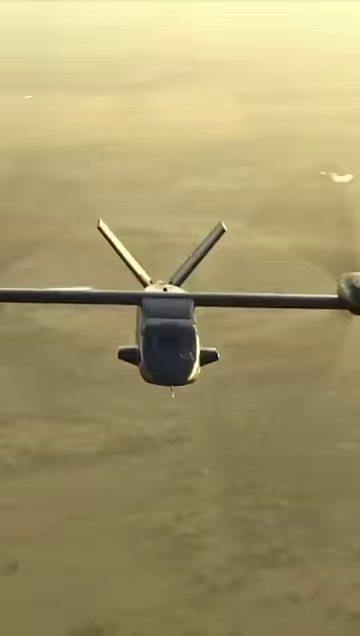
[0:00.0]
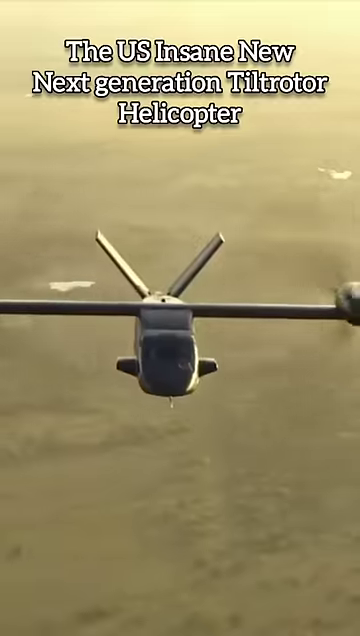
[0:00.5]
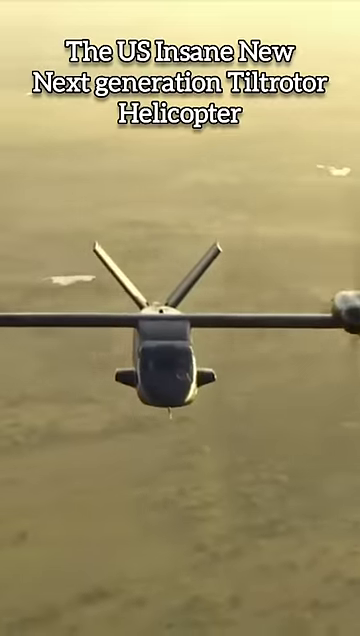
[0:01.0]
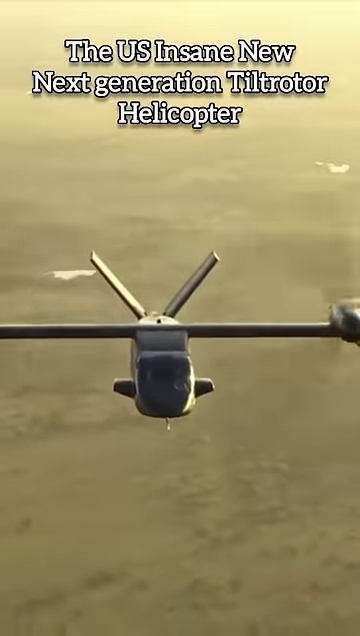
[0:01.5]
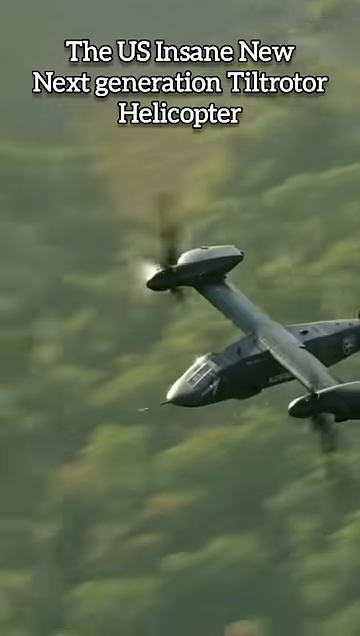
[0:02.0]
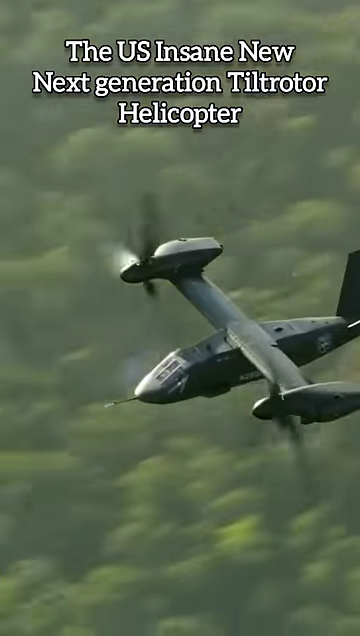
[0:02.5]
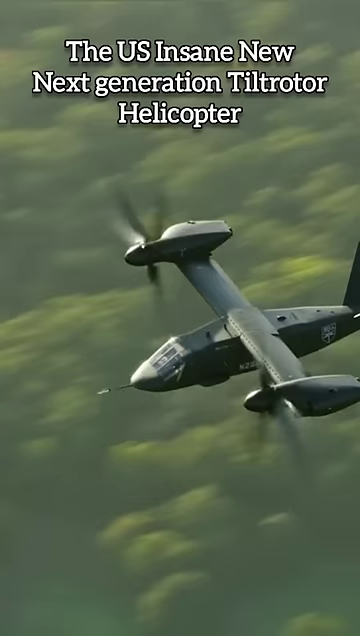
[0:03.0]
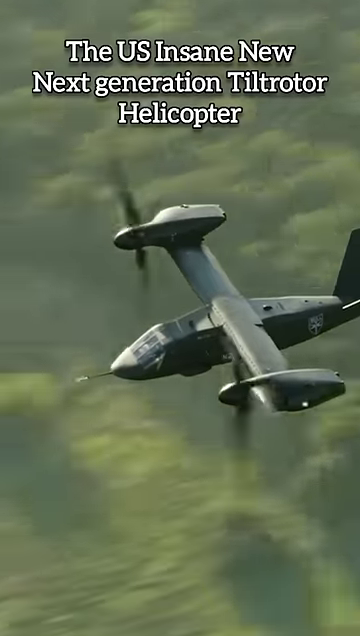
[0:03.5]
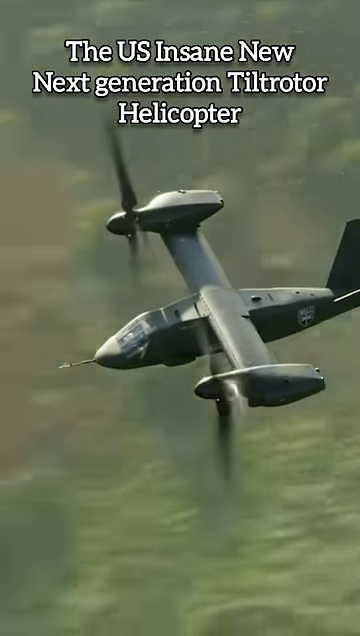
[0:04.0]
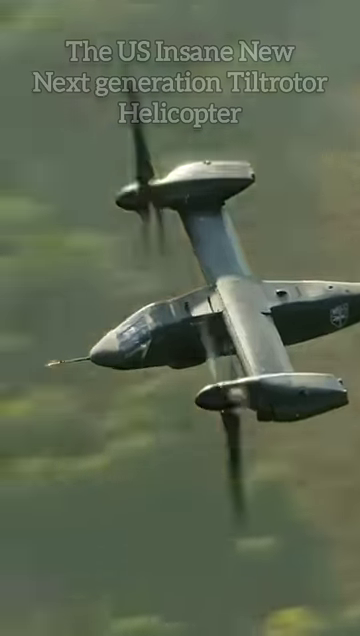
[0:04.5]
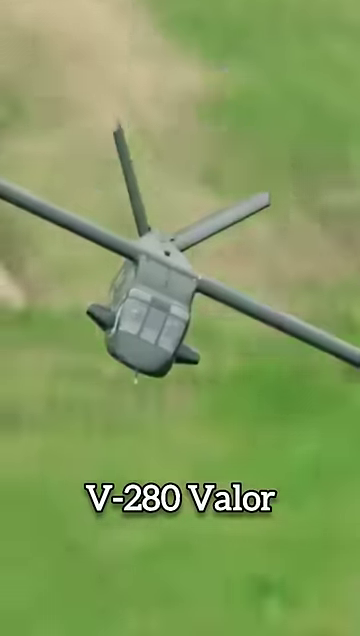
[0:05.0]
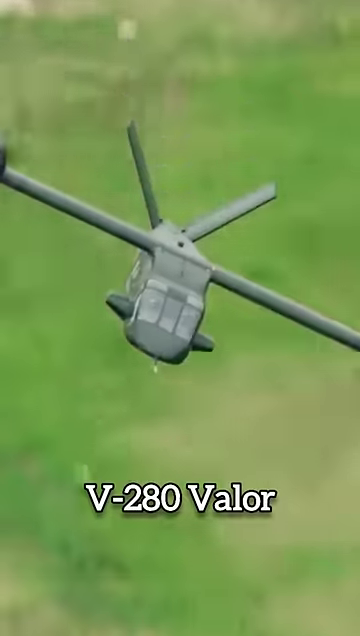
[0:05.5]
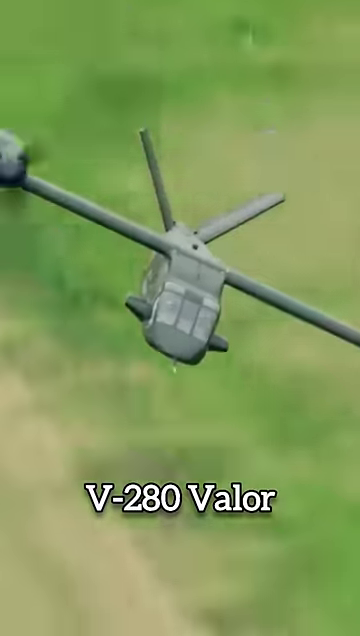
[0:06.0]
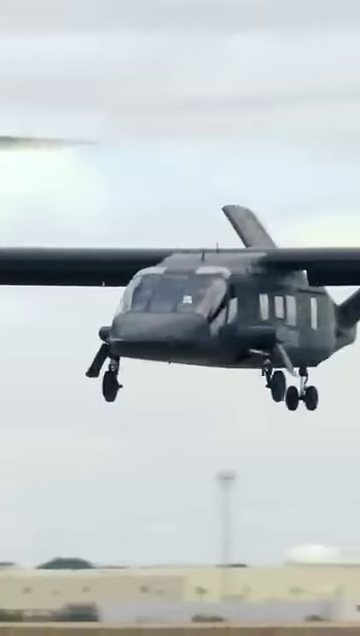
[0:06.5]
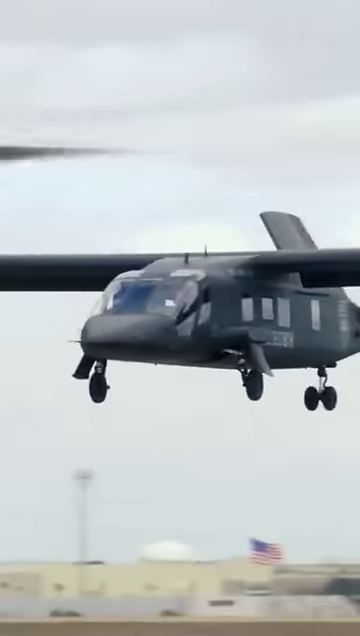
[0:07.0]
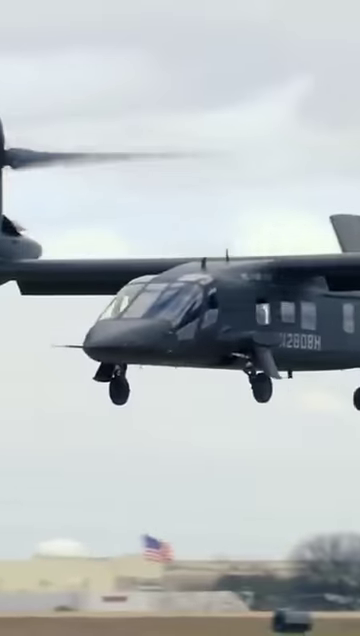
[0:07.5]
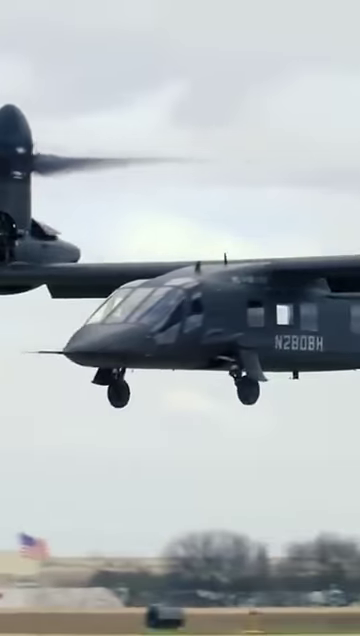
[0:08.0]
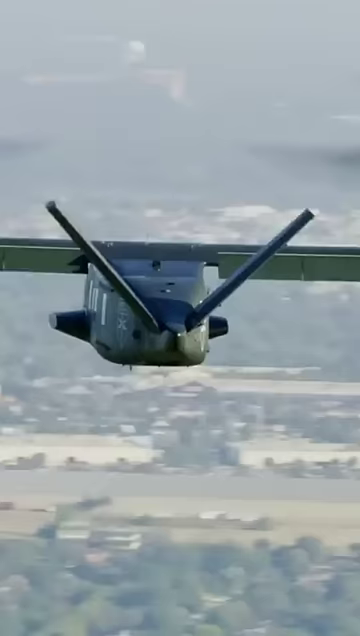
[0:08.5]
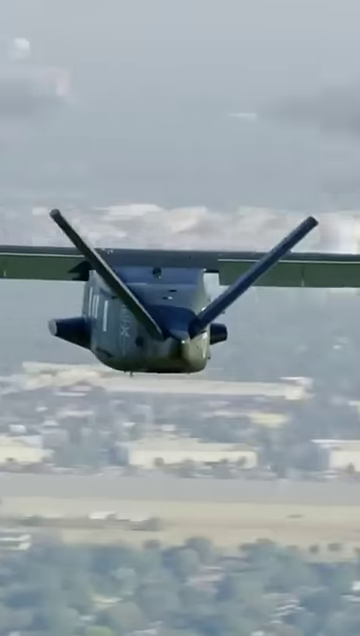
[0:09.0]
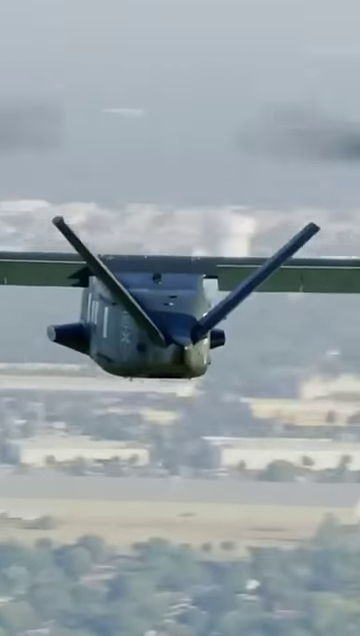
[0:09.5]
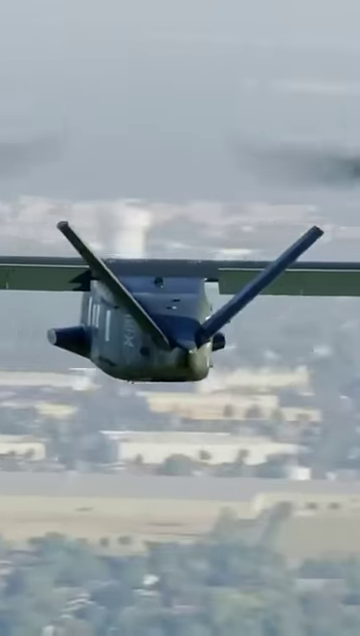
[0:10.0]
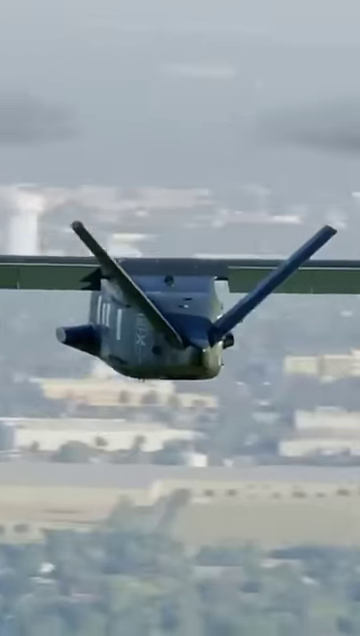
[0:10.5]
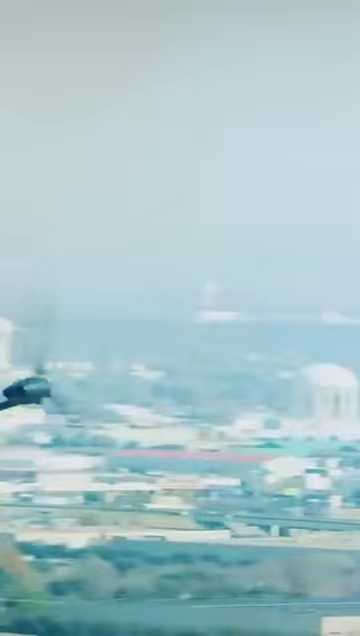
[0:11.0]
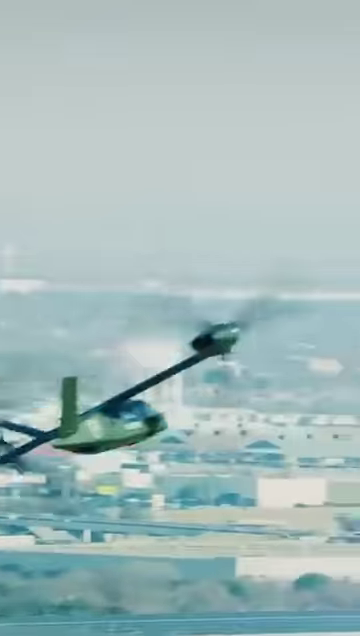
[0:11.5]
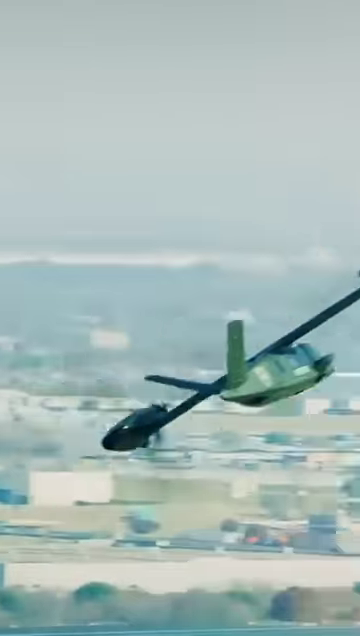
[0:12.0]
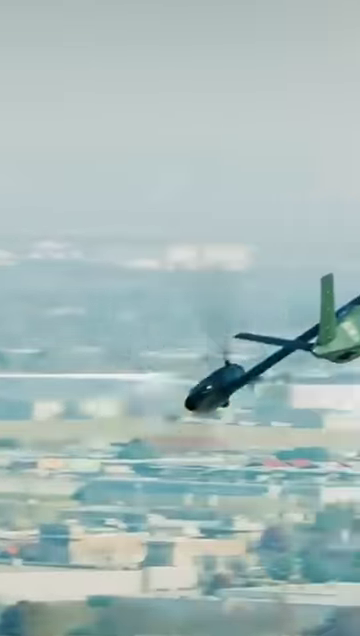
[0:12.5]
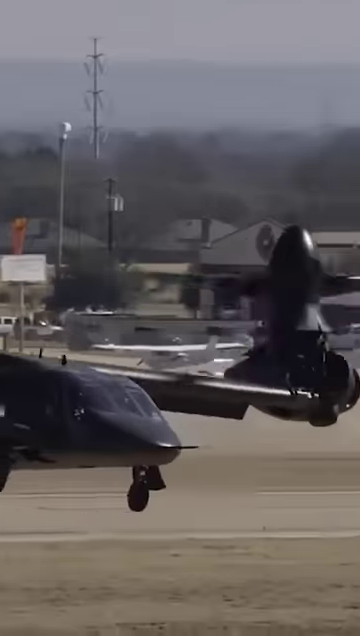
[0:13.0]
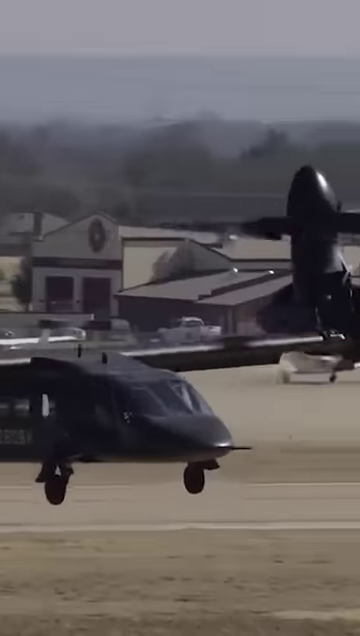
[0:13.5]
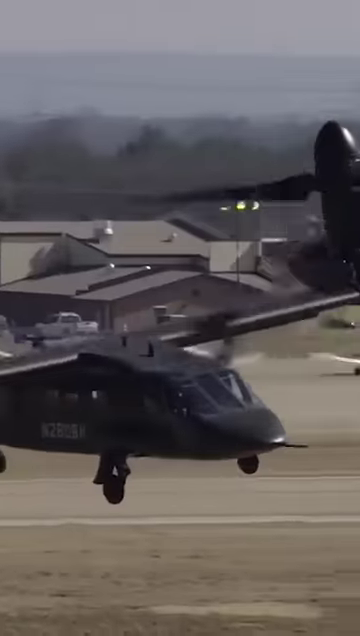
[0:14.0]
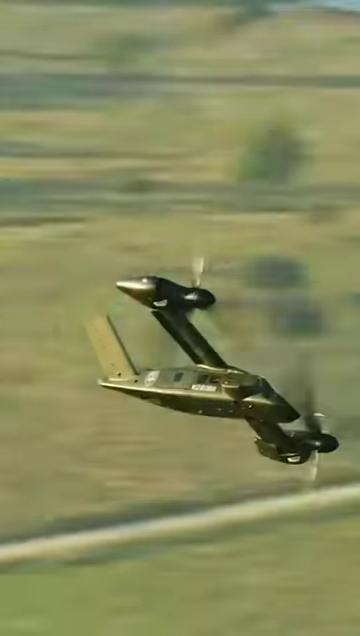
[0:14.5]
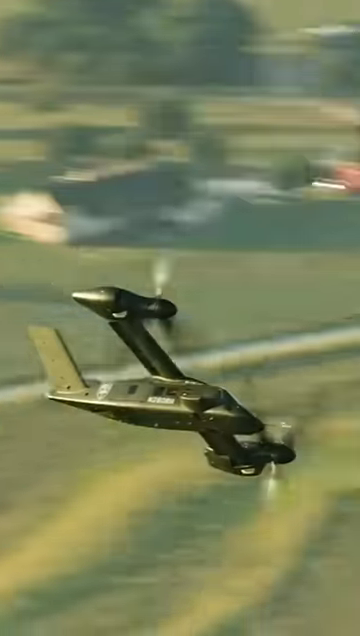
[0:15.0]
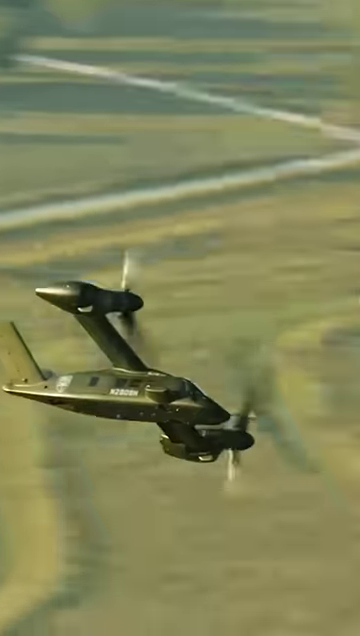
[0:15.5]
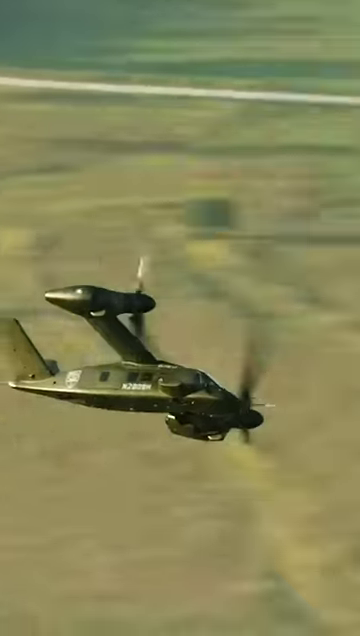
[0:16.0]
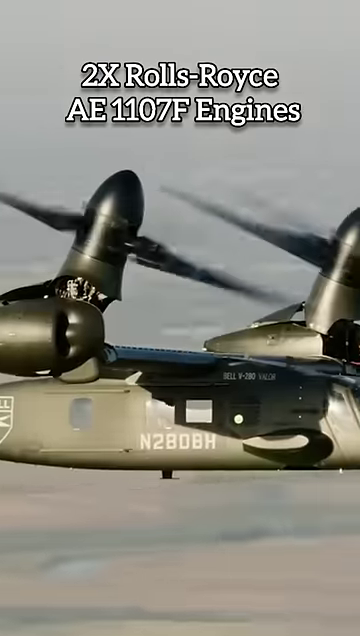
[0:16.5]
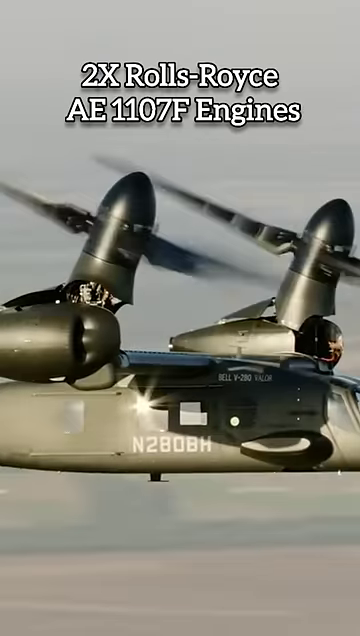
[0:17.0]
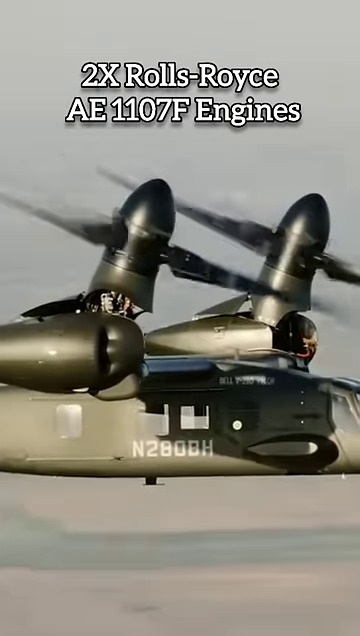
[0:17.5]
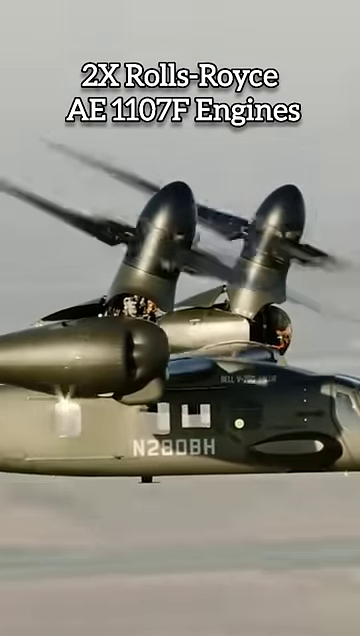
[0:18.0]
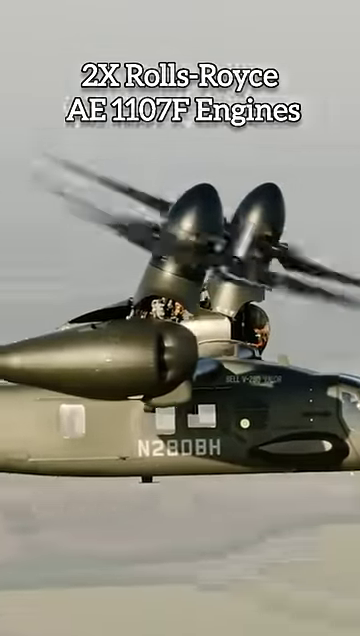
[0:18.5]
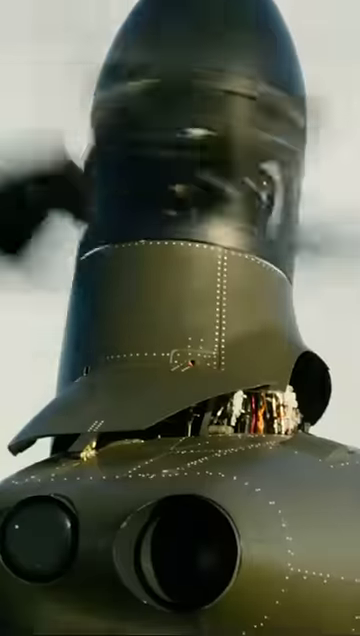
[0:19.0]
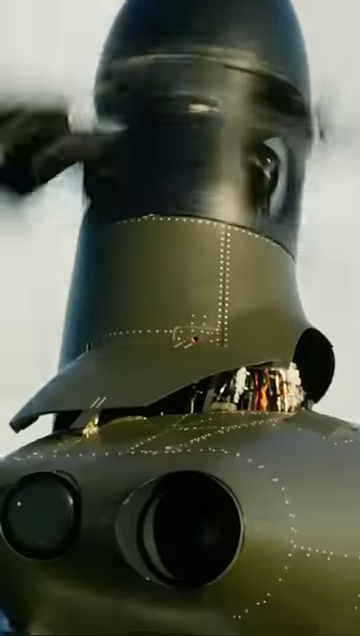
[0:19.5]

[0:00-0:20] A new military aircraft is the subject, seemingly a kind of airplane-helicopter combination, seen flying through the sky. It is unclear whether this is actual footage or CGI. The aircraft has two propellers, almost like the propellers on a helicopter, which can go vertical or horizontal. Text says it is "the next generation of Navy helicopter". Several shots show the vehicle flying in the air.